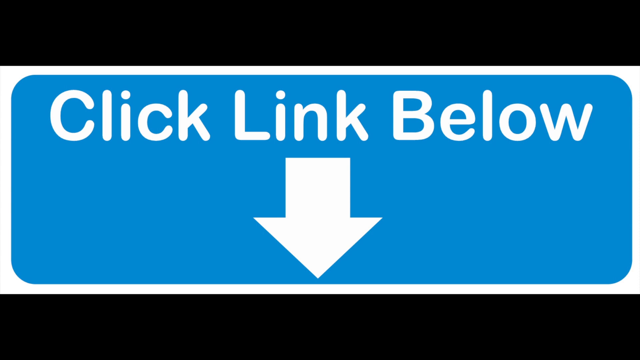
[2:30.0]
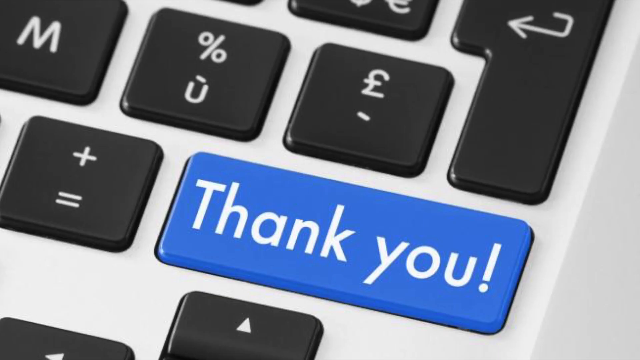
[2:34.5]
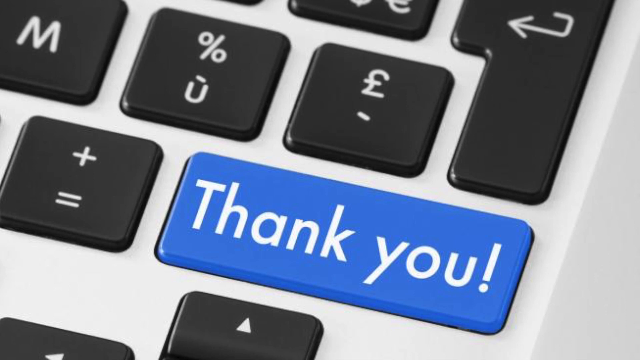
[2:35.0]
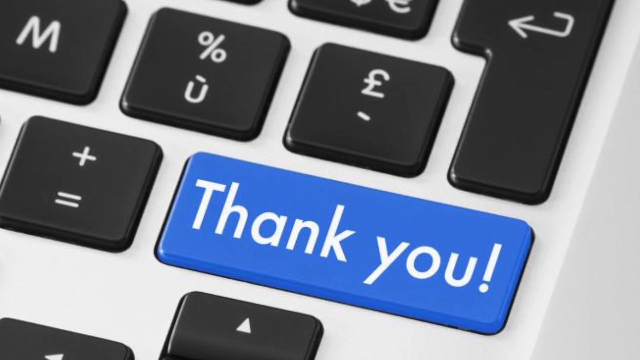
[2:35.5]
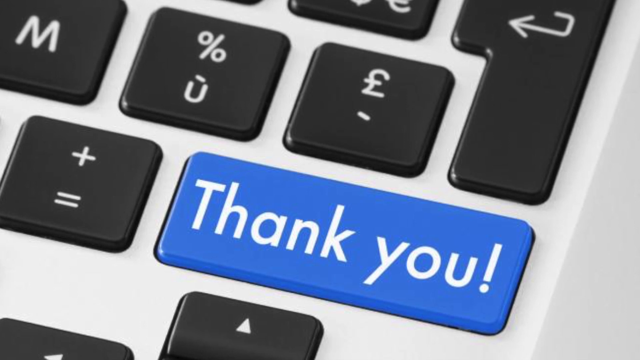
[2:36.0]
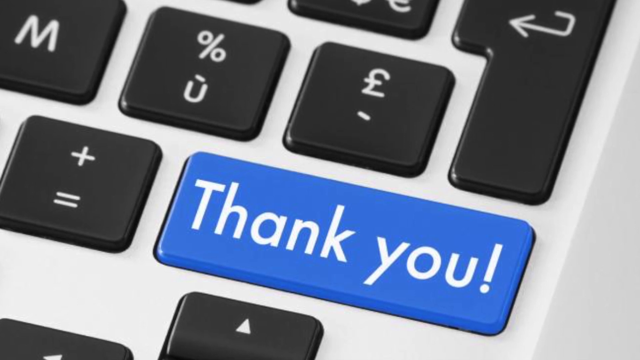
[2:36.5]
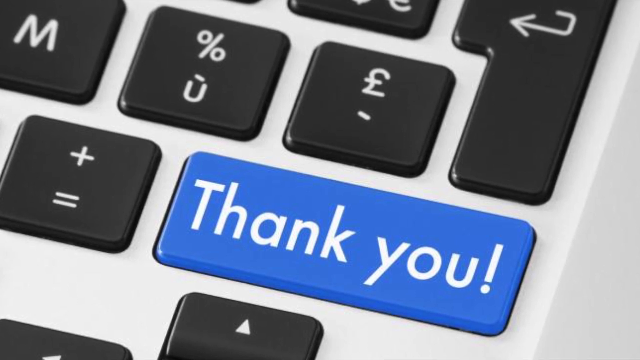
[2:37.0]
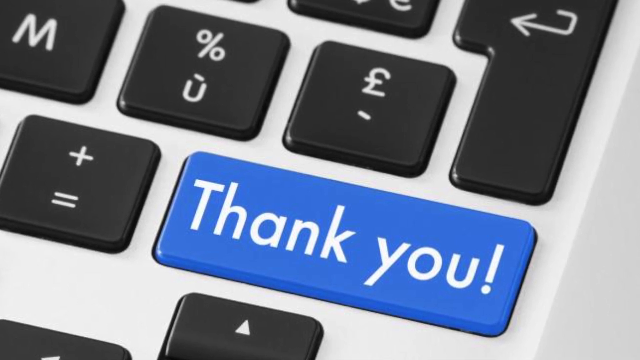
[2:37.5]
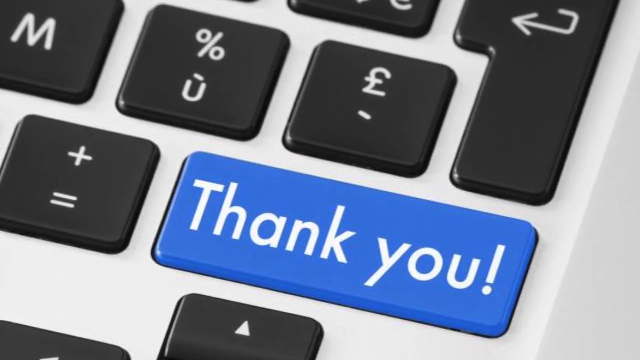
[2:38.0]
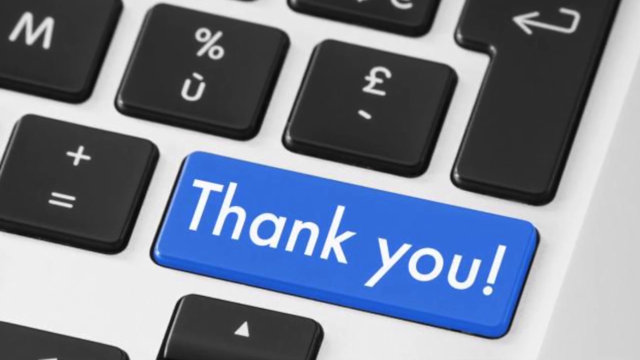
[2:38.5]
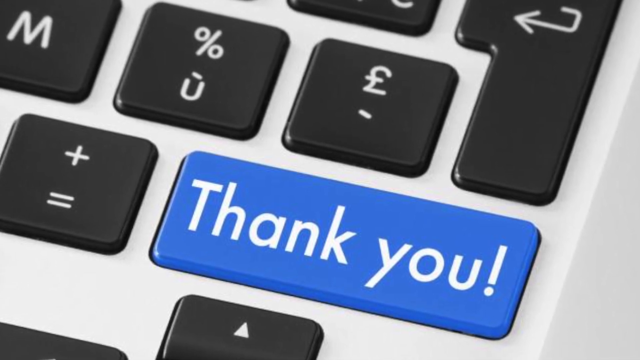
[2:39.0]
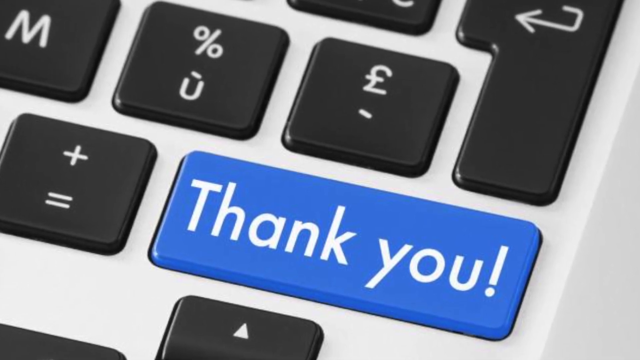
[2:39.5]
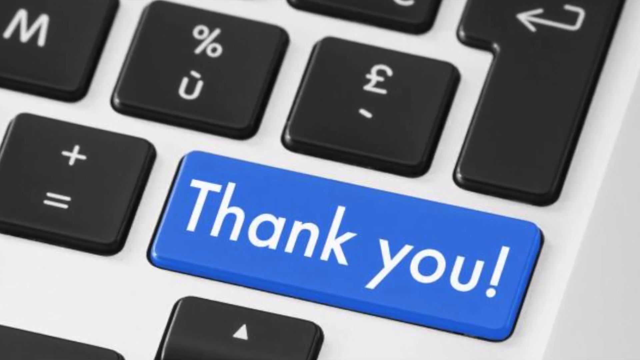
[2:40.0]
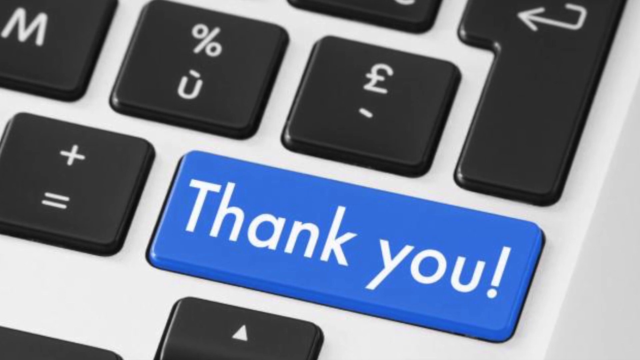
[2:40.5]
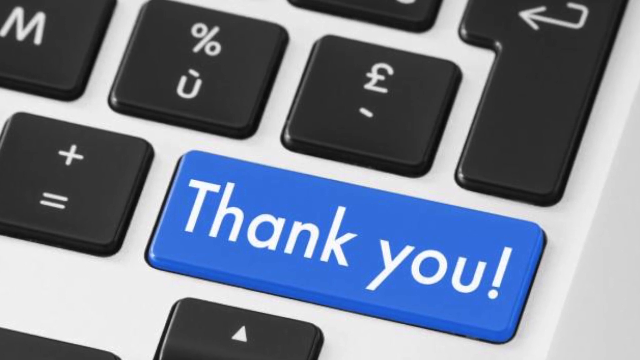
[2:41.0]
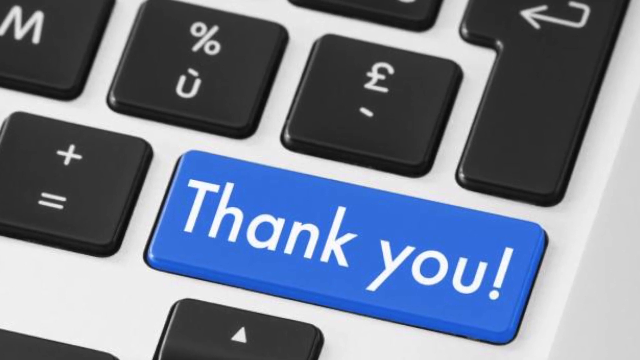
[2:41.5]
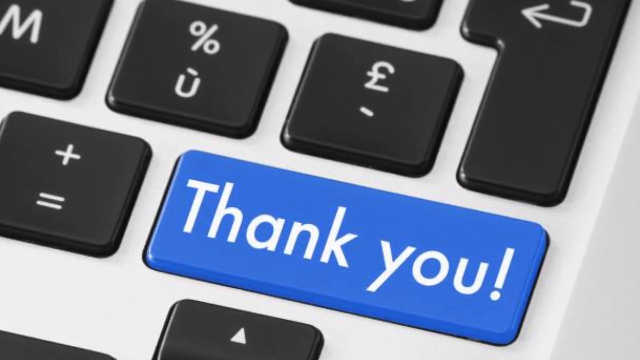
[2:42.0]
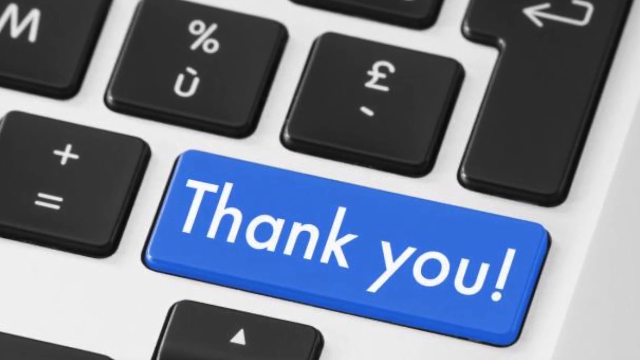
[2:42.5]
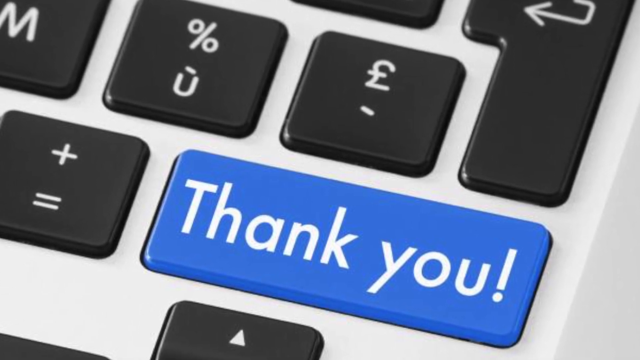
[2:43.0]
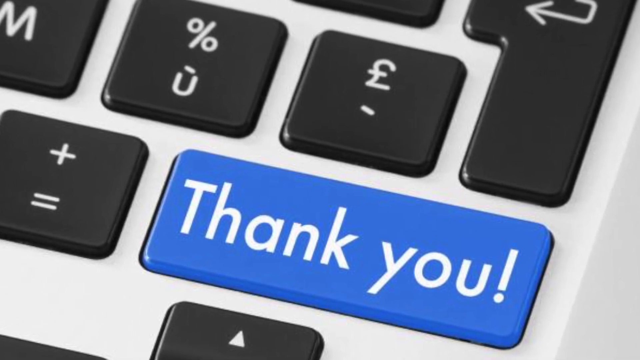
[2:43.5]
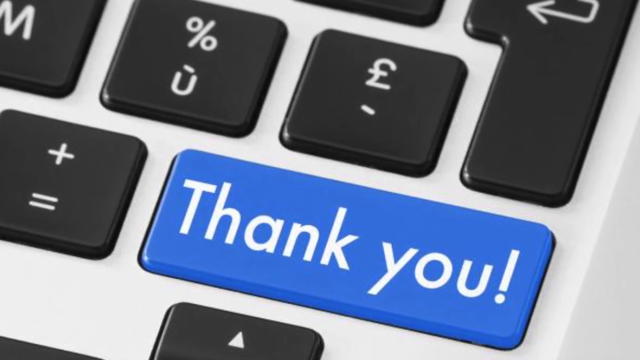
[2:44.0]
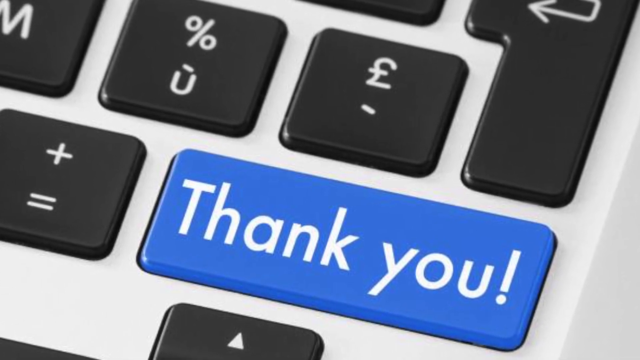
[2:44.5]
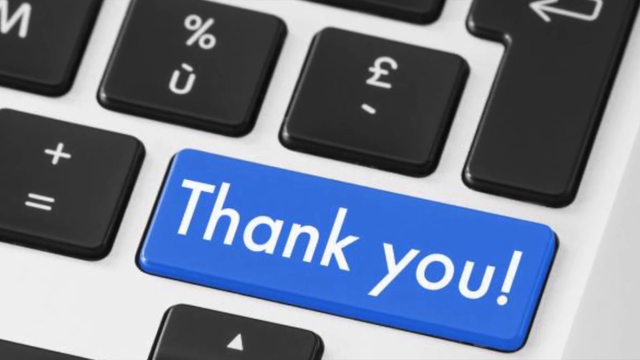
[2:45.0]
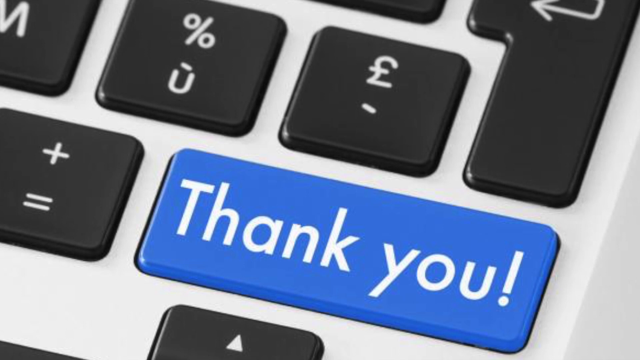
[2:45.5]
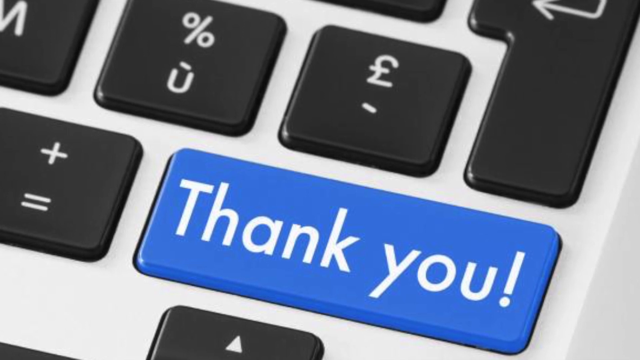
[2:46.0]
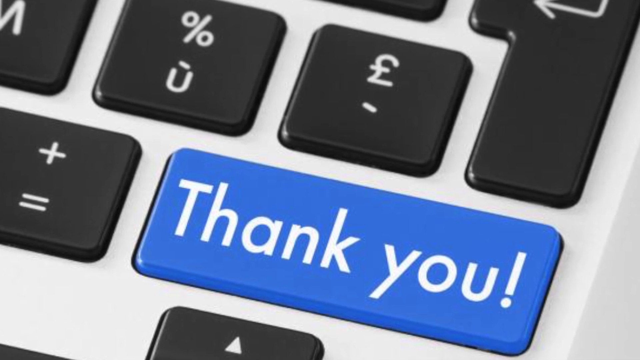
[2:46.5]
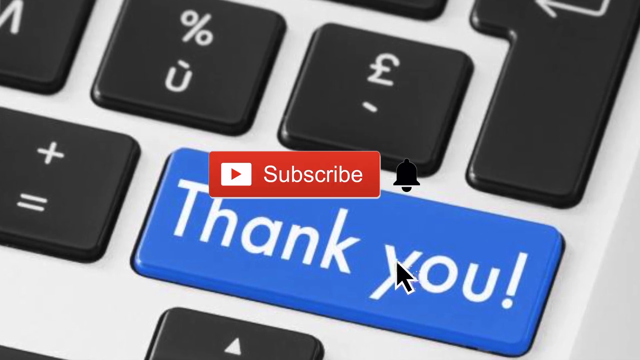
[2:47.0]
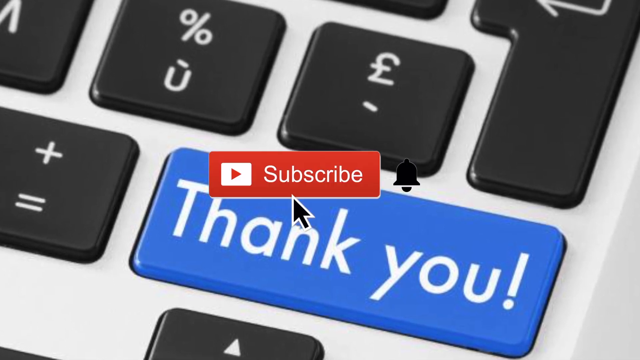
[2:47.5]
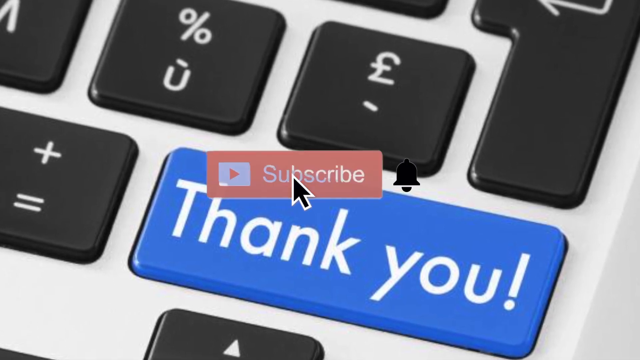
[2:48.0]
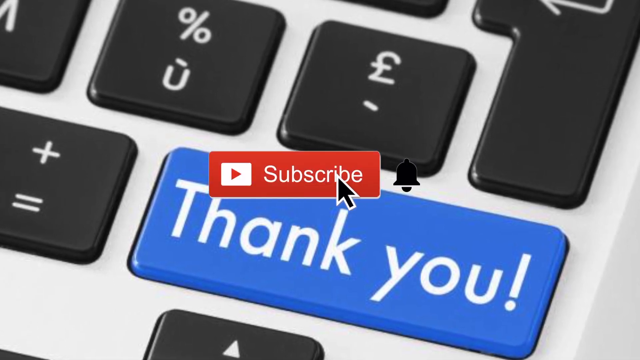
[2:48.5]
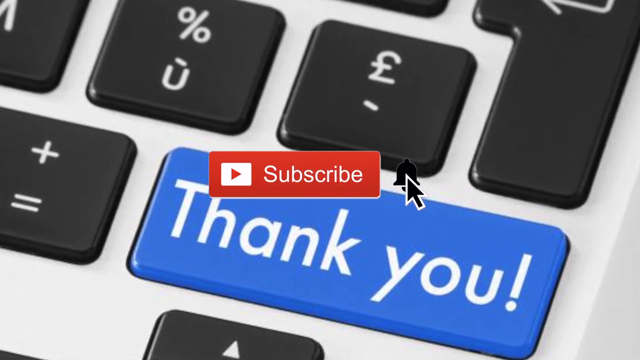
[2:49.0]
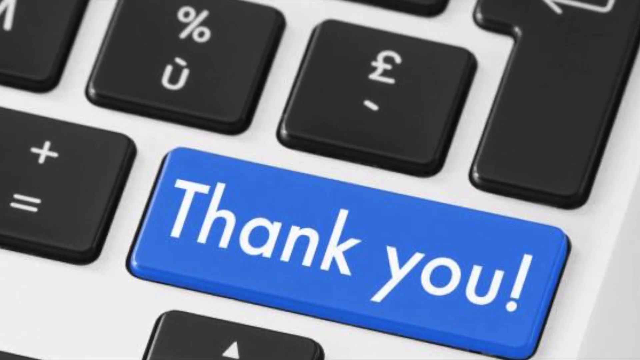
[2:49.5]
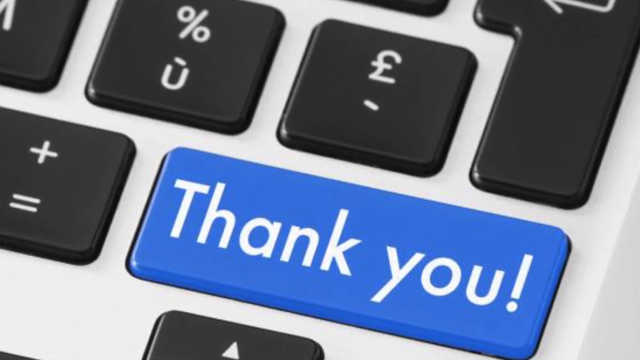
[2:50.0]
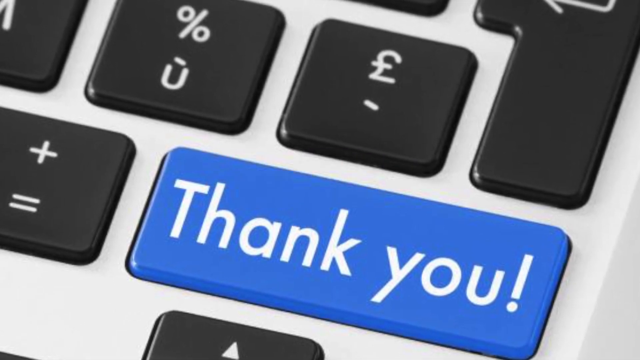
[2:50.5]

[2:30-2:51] A blue box with a white border contains white text reading "click link below", with a downward white arrow in the middle of the screen. The scene transitions to a zoomed-in shot of the right side of a keyboard showing an Enter button, a Pound button, a Percentage button, a Plus and Equals button and the M key, plus a custom key added at the lower centre of the screen that is blue instead of black, with white text reading "Thank you". The camera slightly zooms in towards the "Thank you" key over several seconds. A red rectangle with a thin white border around the bottom edge appears, with white text in the middle reading "subscribe" and a red and white YouTube logo. A black cursor with a white outline hovers over the subscribe button, and a black bell is just to the right of the subscribe box. The mouse clicks the subscribe button, then moves right over the black bell and clicks it as well; the bell changes from black to grey when clicked.